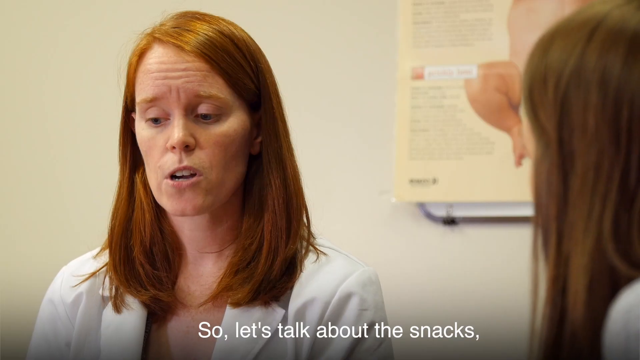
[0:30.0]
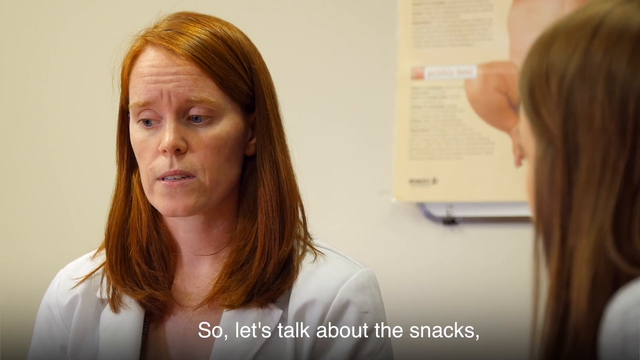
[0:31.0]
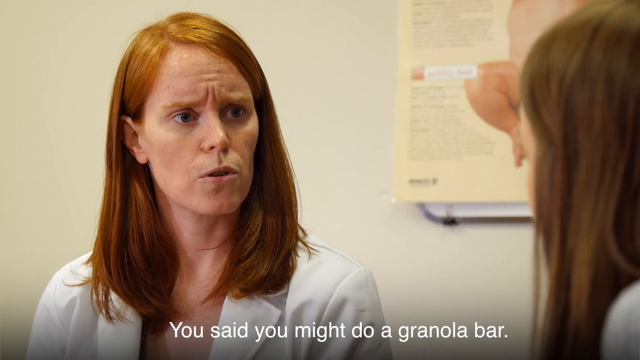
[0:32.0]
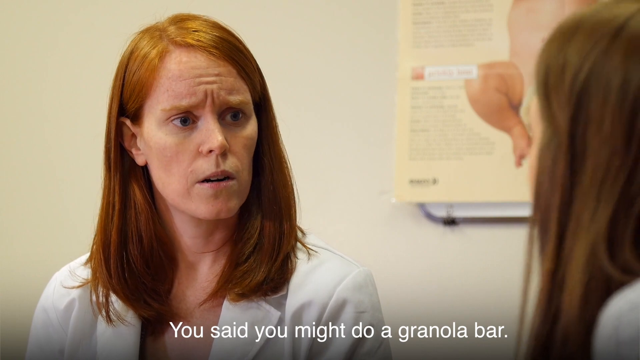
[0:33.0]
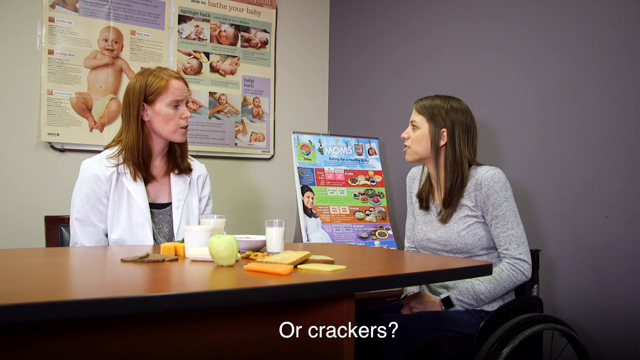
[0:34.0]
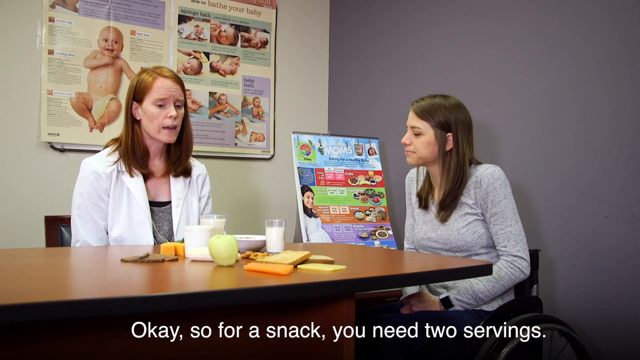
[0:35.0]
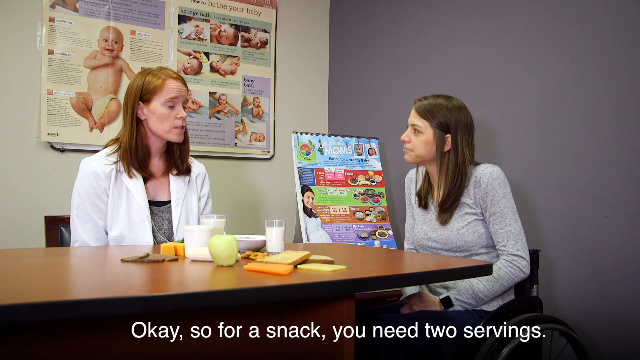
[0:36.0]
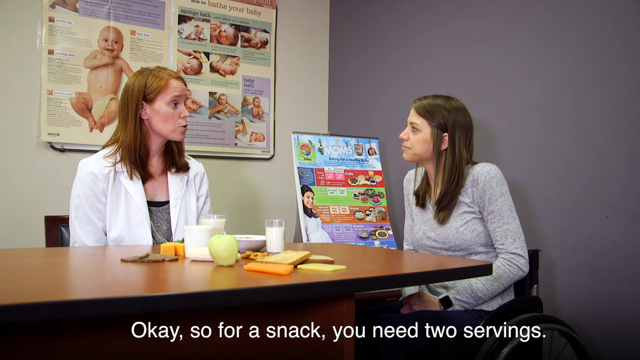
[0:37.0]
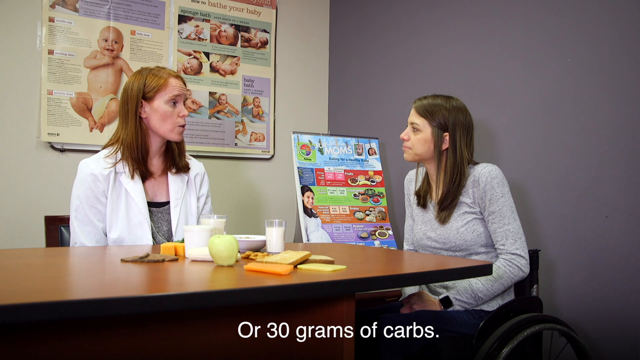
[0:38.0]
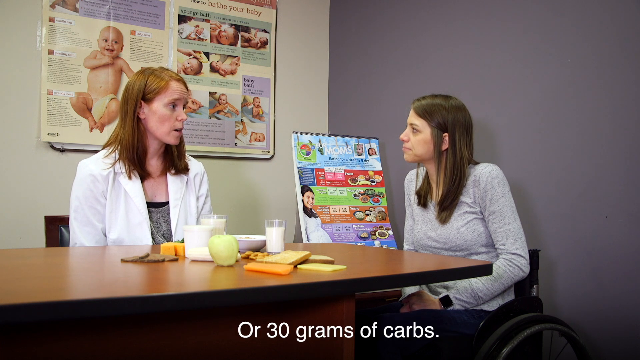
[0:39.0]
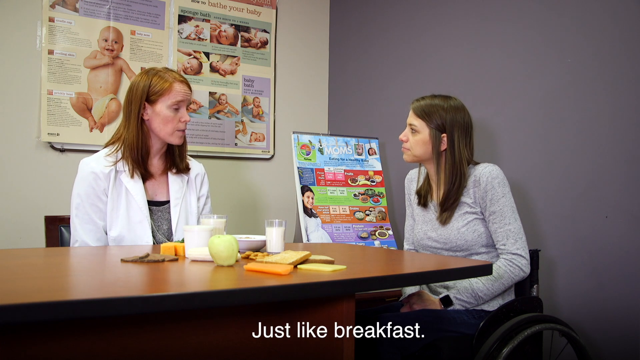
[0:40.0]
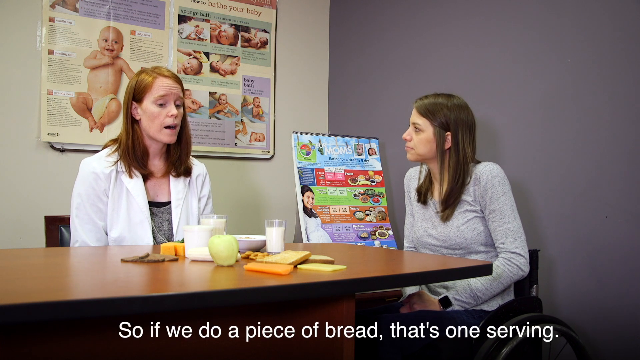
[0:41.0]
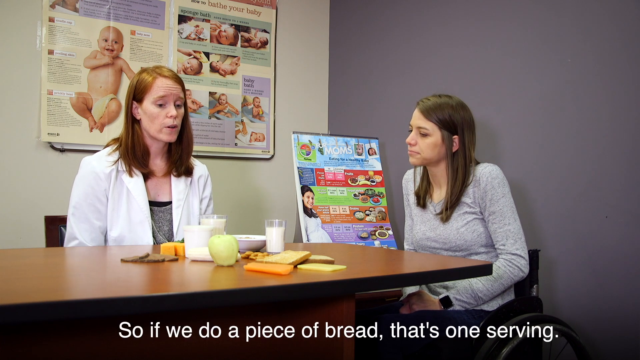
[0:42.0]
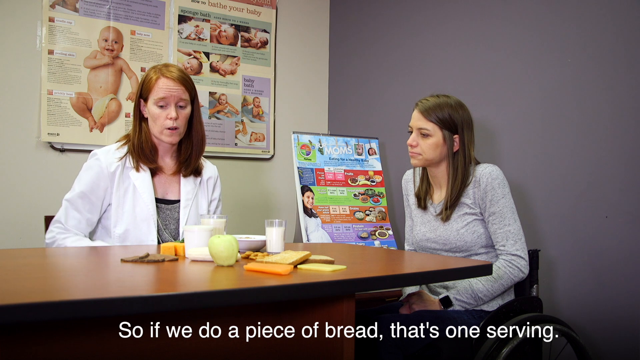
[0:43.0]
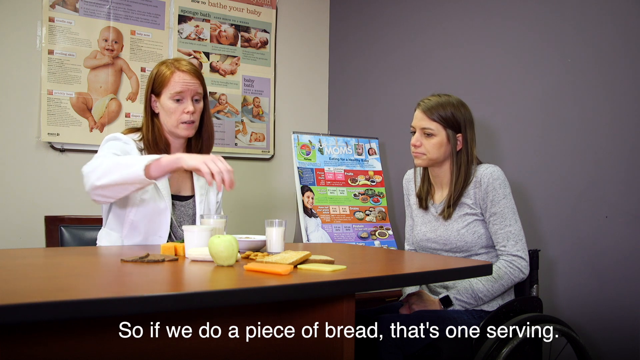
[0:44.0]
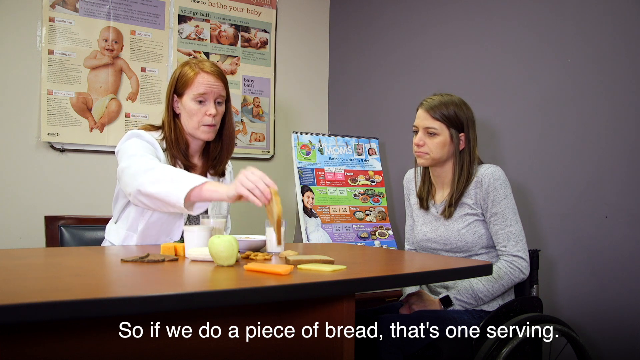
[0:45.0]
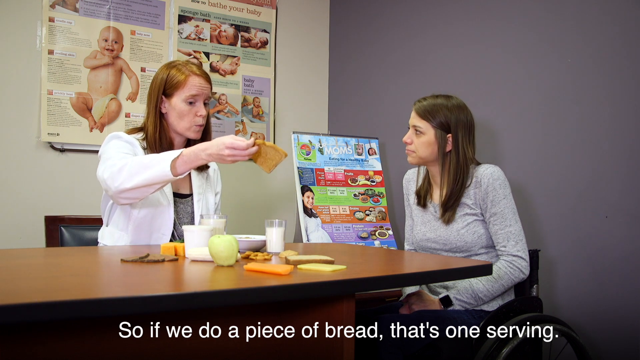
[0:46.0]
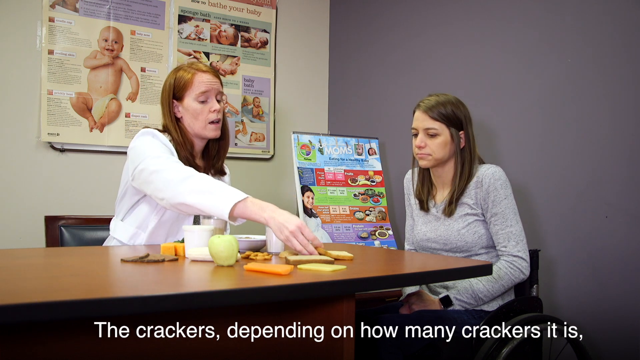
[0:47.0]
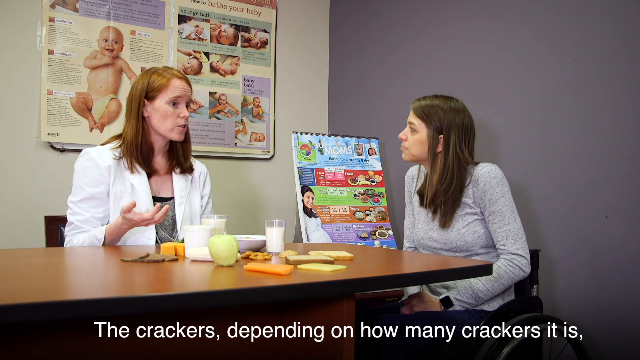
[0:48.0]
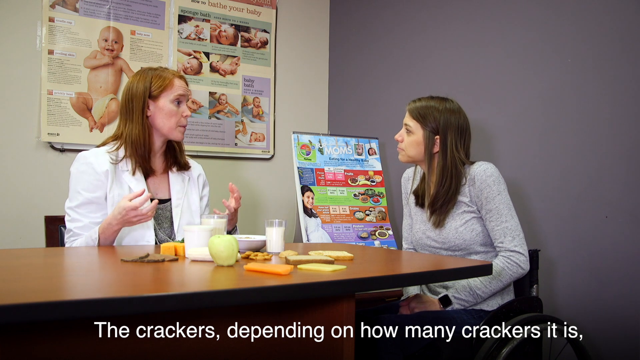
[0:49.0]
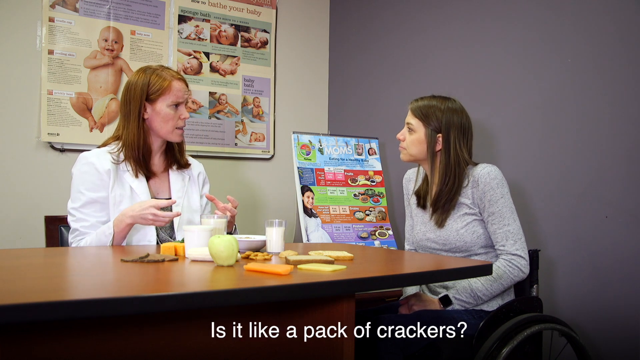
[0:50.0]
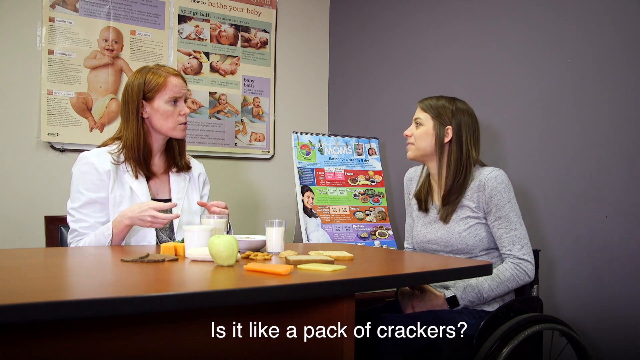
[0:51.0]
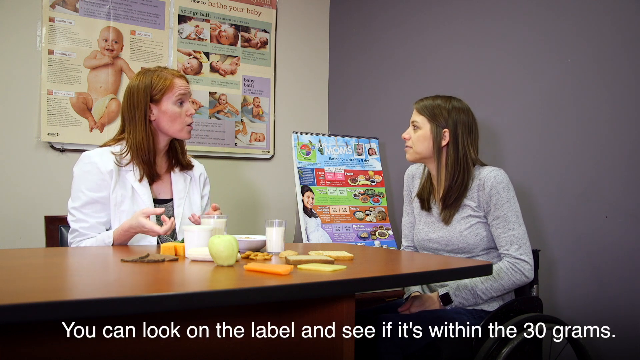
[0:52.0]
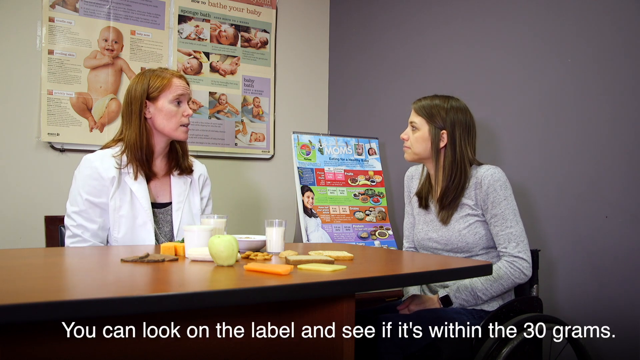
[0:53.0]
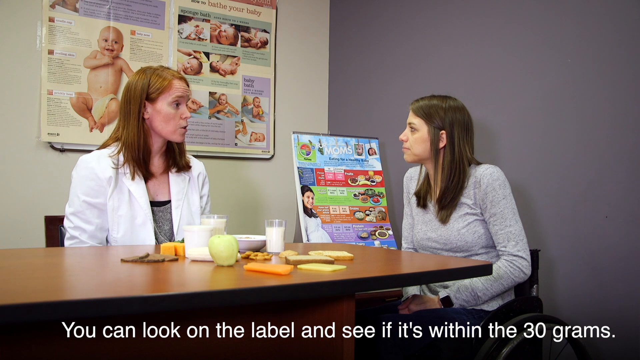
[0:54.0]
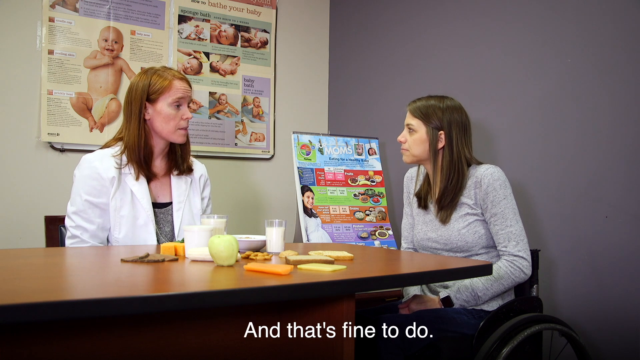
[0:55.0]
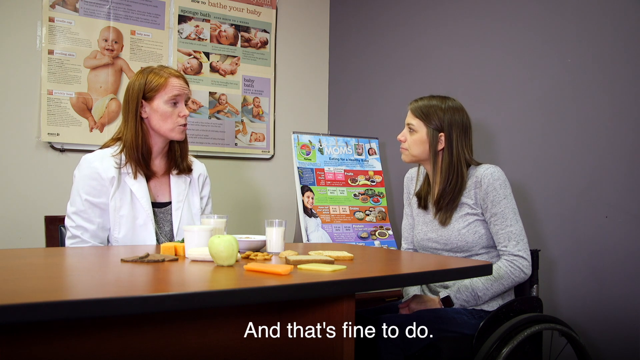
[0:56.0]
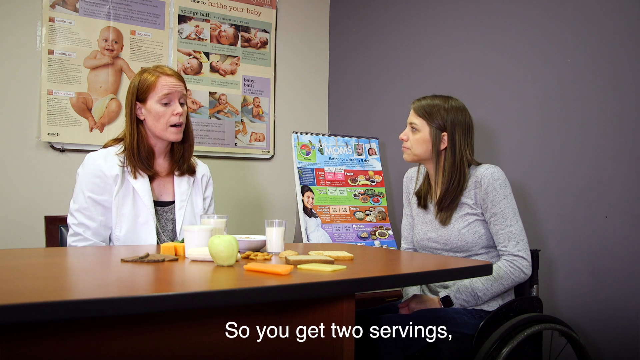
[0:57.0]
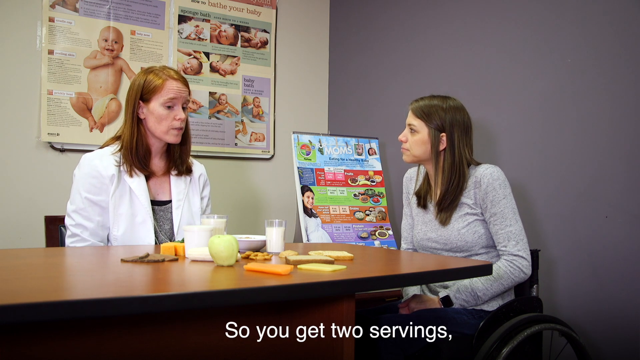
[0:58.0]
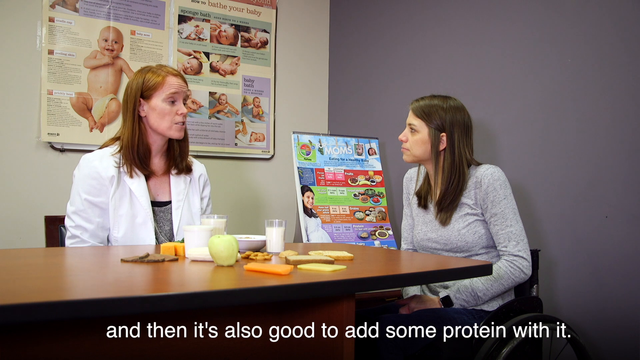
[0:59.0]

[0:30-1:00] The doctor or nutritionist continues talking with the pregnant patient. They sit across from each other at a table in what looks like an office setting, apparently a medical office, with food examples between them. The food appears to be mock or fake food used for illustration. The doctor says that a snack needs two servings or 30 grams of carbs, that a piece of bread is one serving, that a pack of crackers can be checked to see if it is within 30 grams, and that protein should be added.